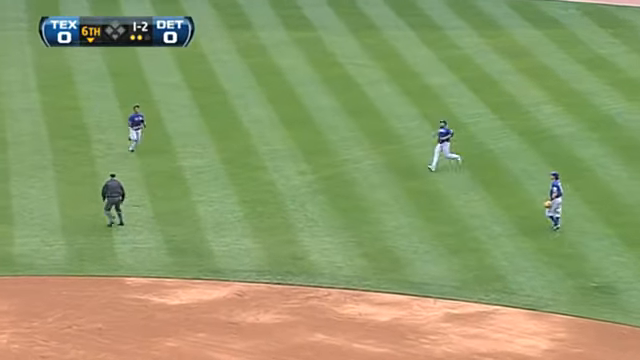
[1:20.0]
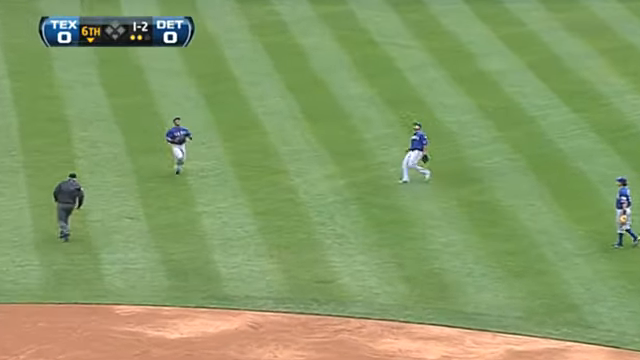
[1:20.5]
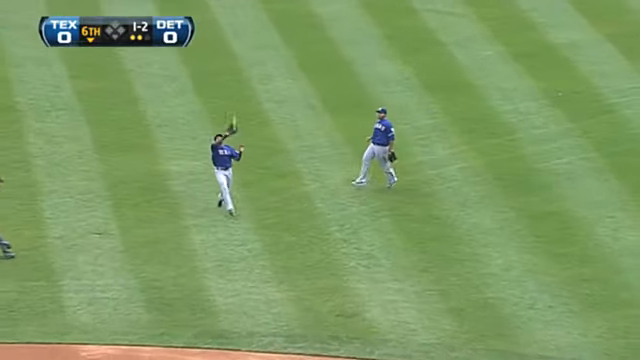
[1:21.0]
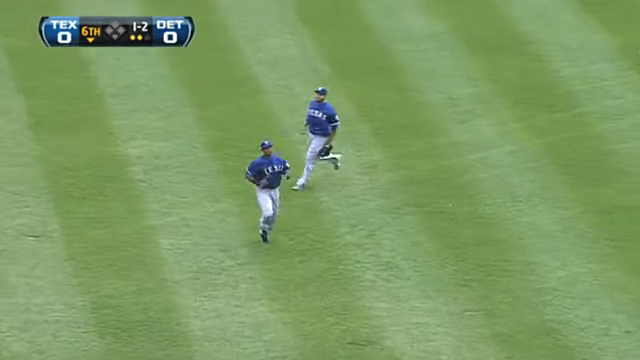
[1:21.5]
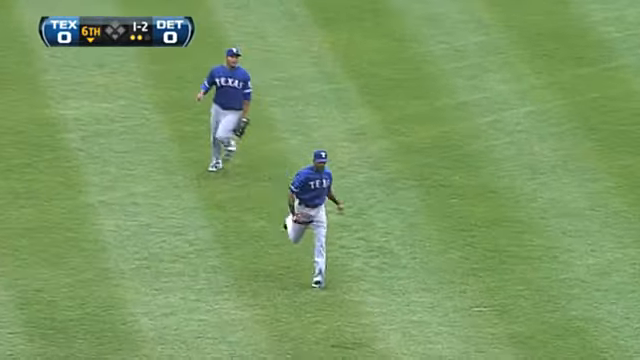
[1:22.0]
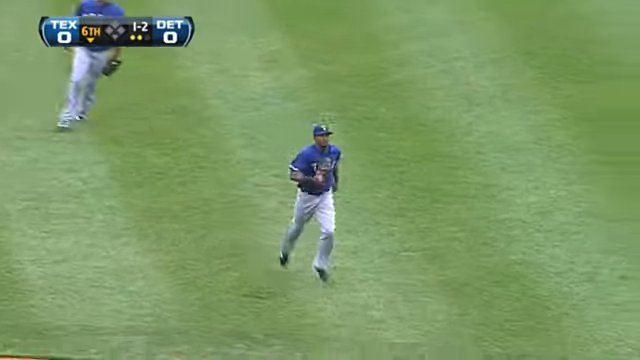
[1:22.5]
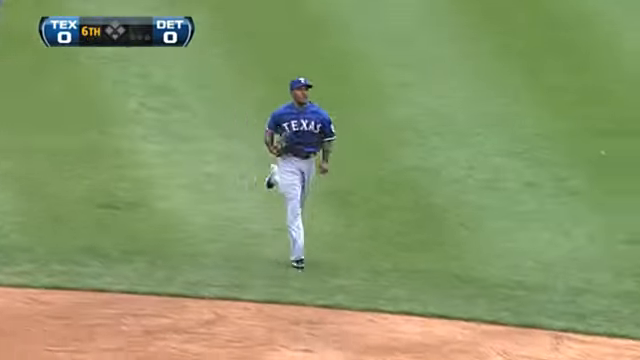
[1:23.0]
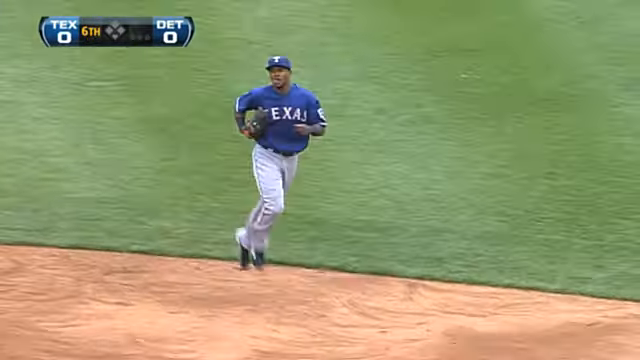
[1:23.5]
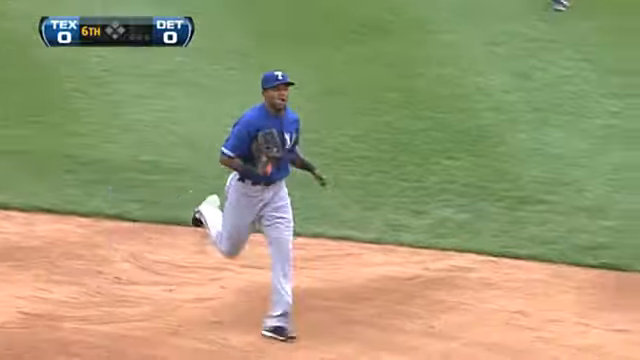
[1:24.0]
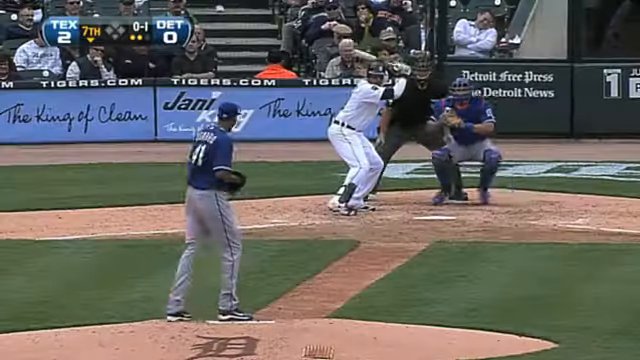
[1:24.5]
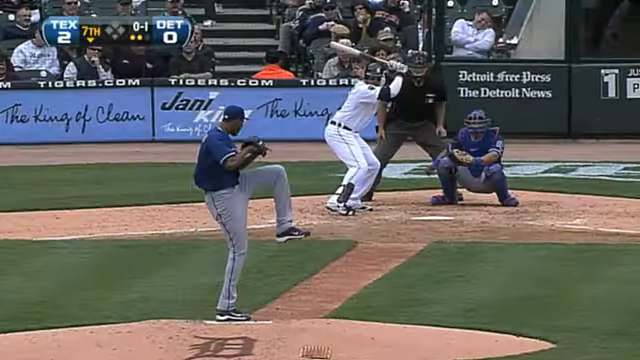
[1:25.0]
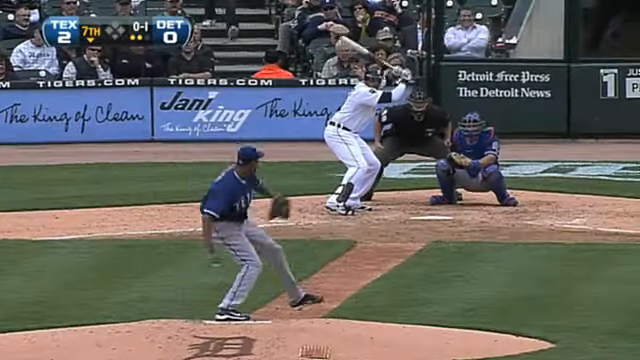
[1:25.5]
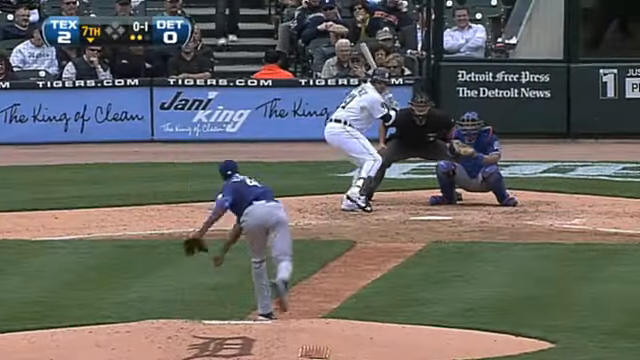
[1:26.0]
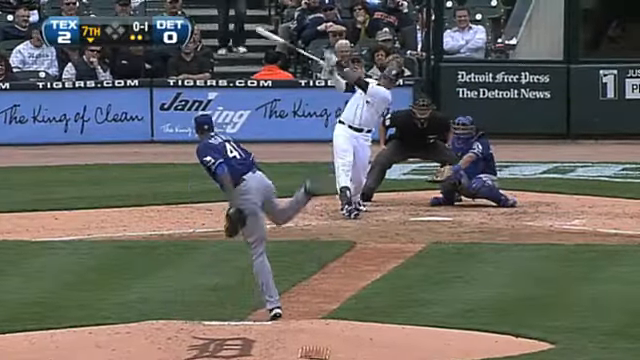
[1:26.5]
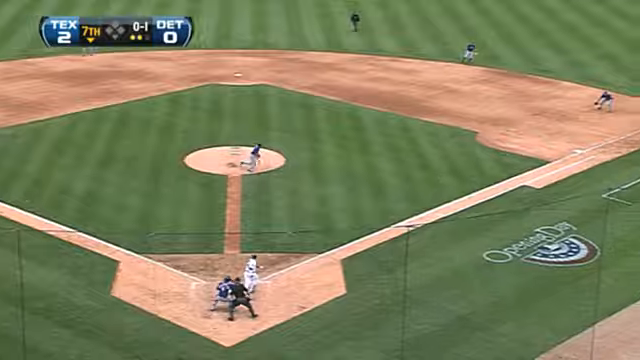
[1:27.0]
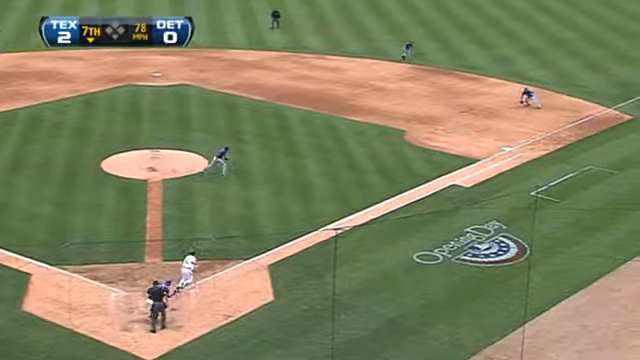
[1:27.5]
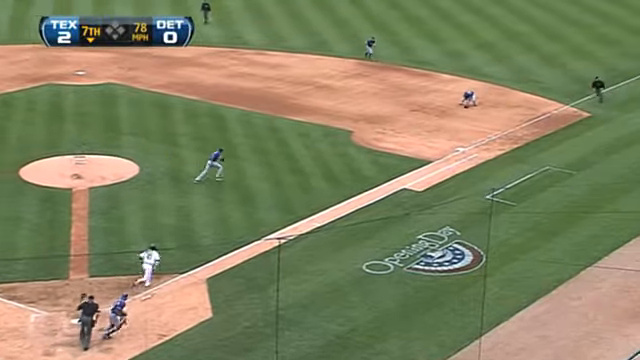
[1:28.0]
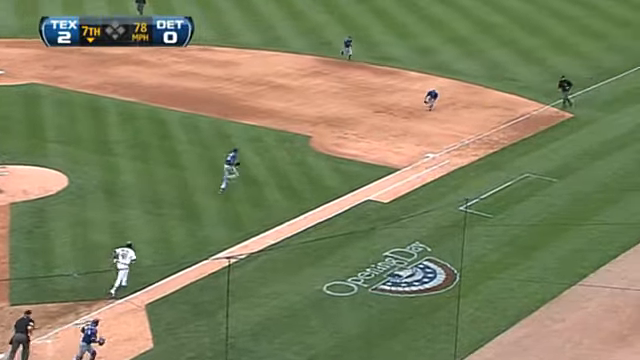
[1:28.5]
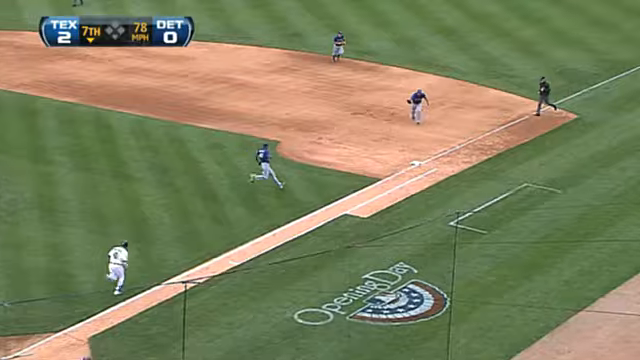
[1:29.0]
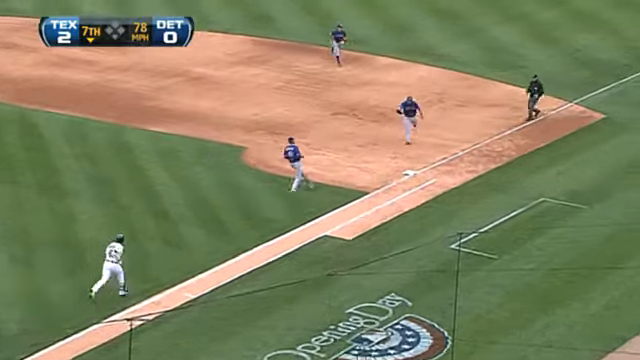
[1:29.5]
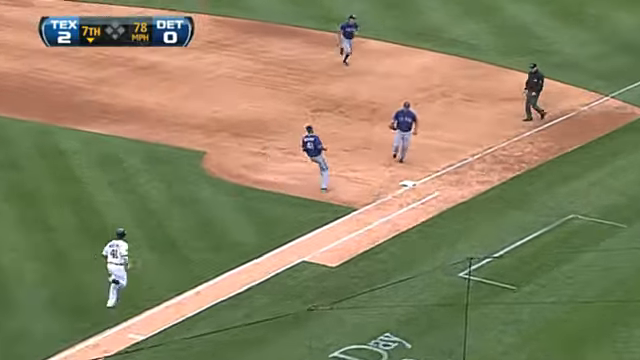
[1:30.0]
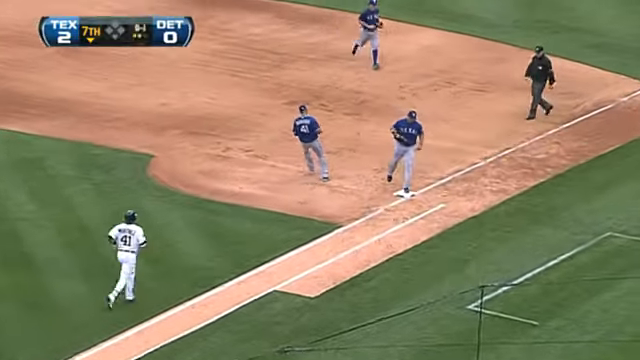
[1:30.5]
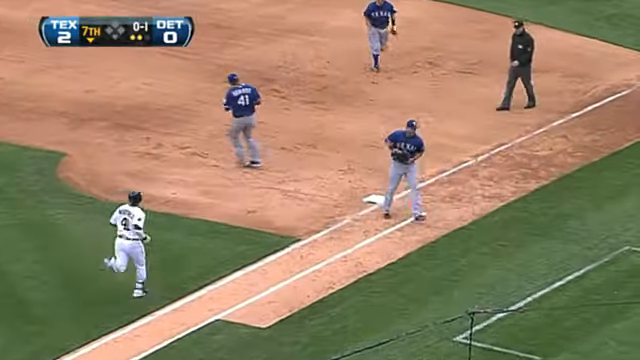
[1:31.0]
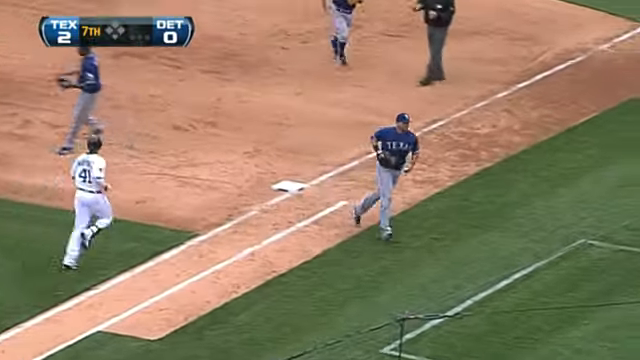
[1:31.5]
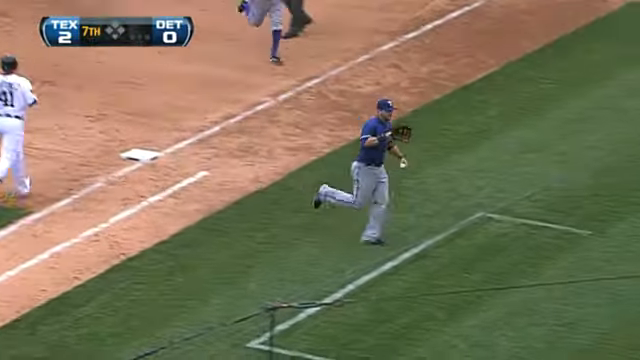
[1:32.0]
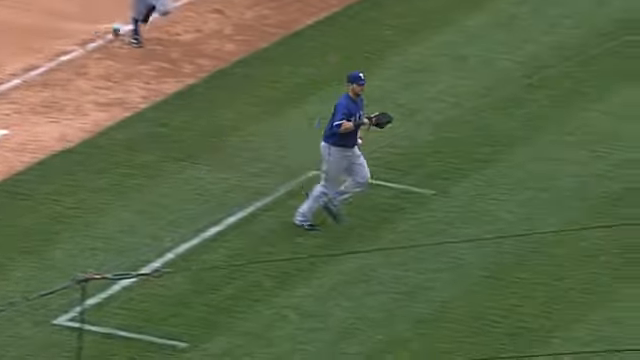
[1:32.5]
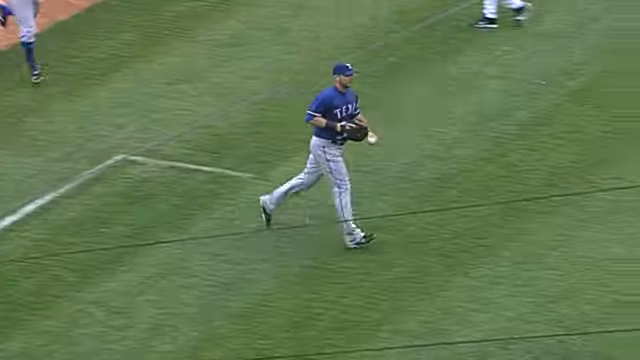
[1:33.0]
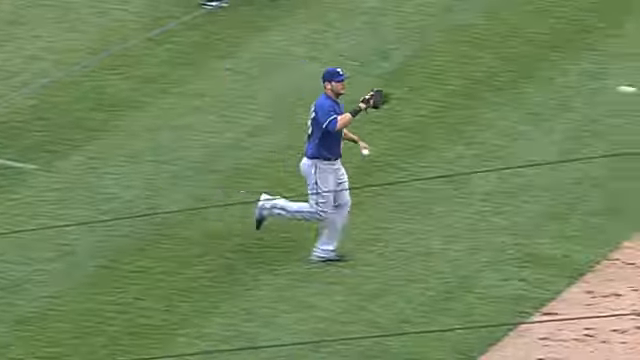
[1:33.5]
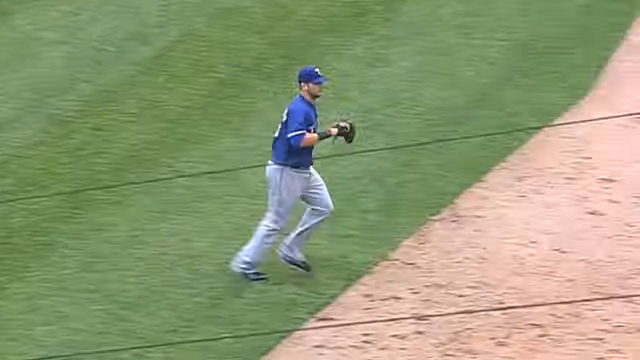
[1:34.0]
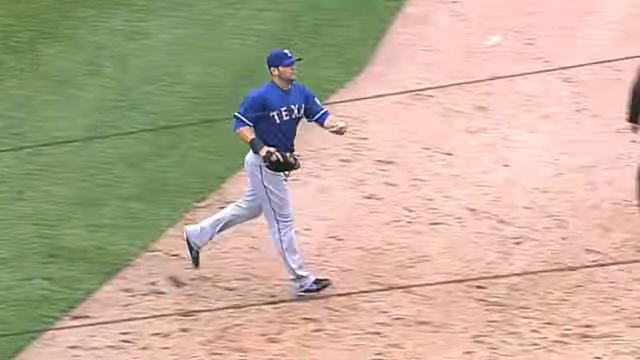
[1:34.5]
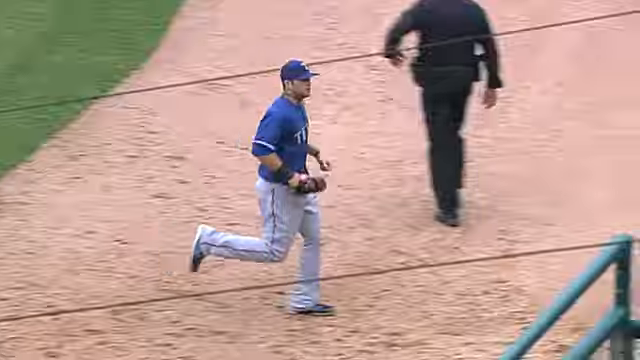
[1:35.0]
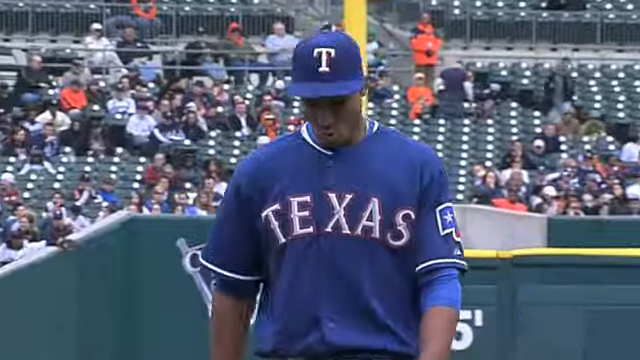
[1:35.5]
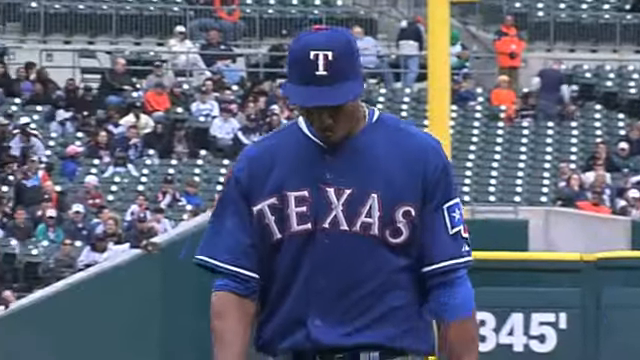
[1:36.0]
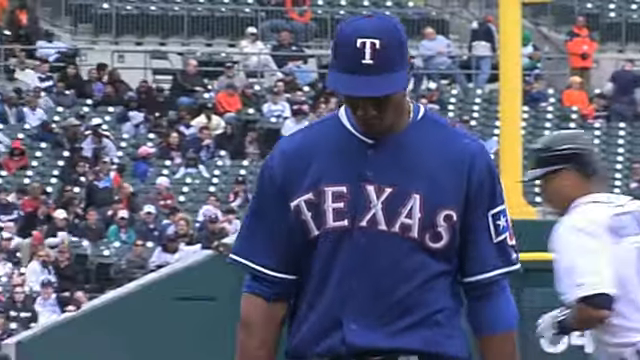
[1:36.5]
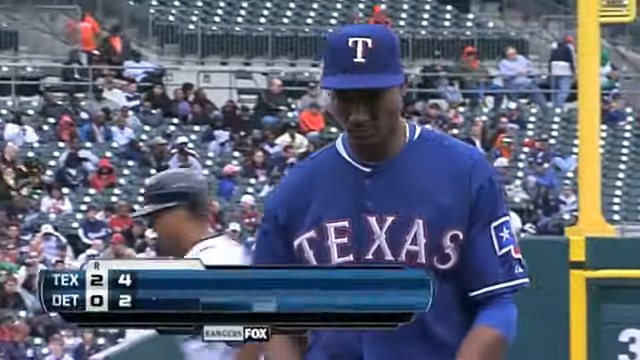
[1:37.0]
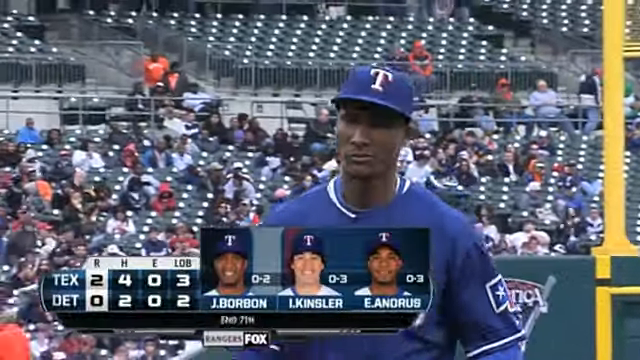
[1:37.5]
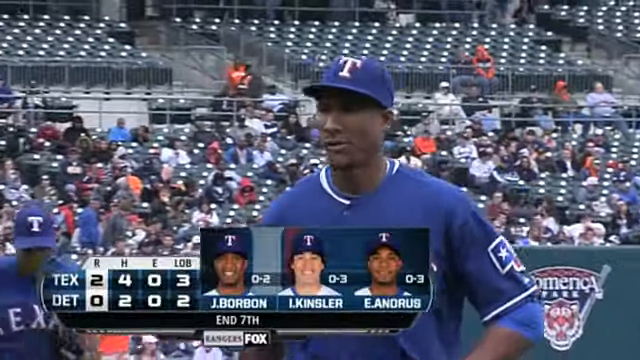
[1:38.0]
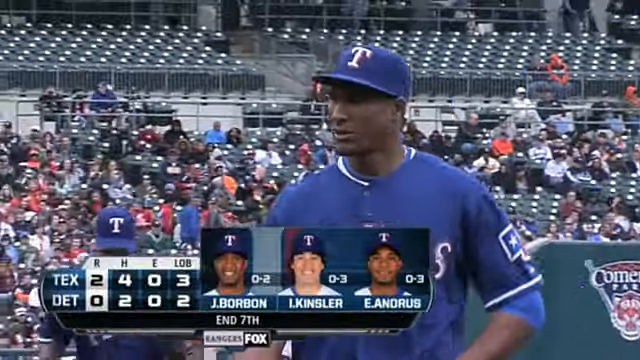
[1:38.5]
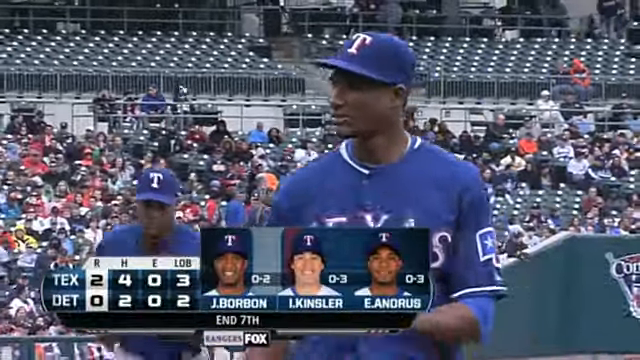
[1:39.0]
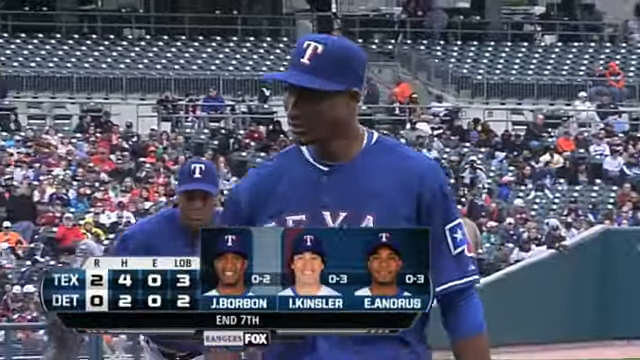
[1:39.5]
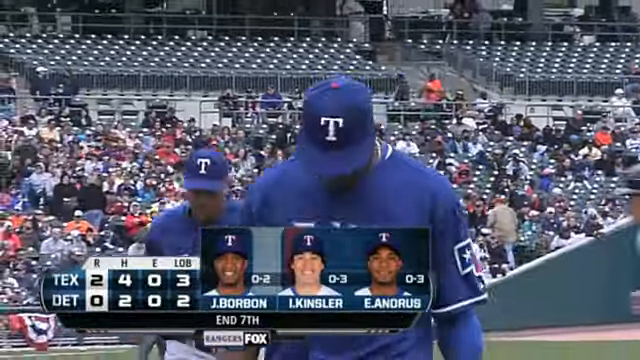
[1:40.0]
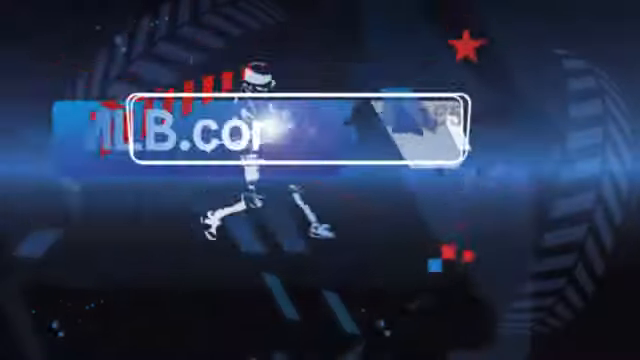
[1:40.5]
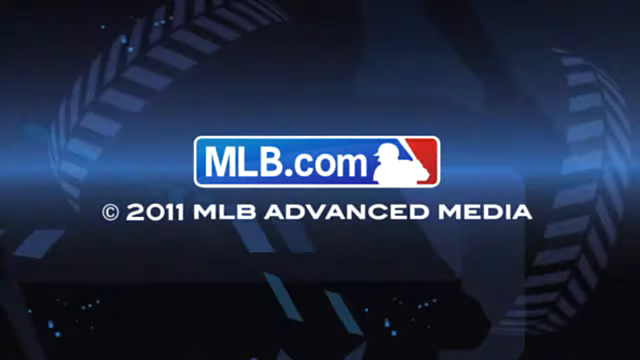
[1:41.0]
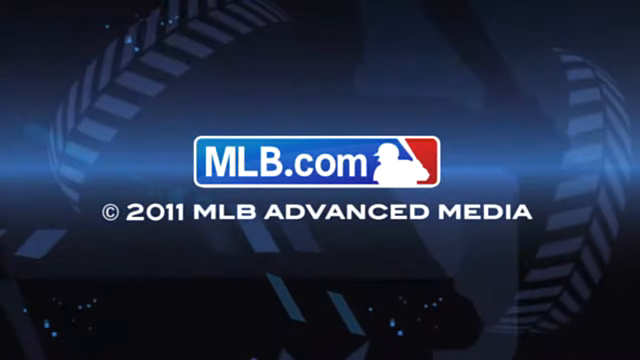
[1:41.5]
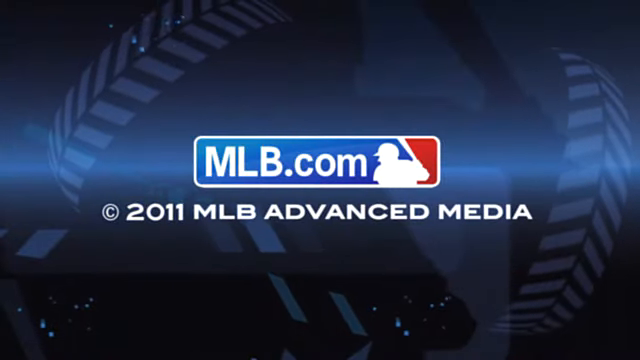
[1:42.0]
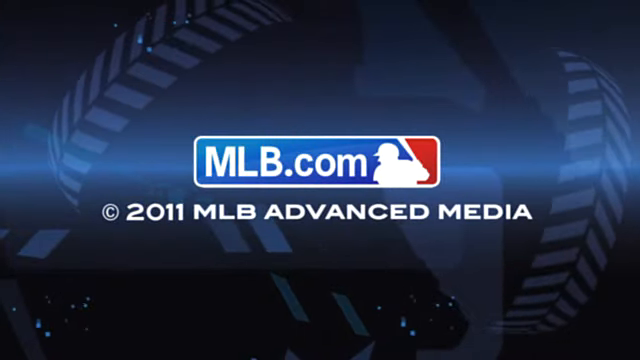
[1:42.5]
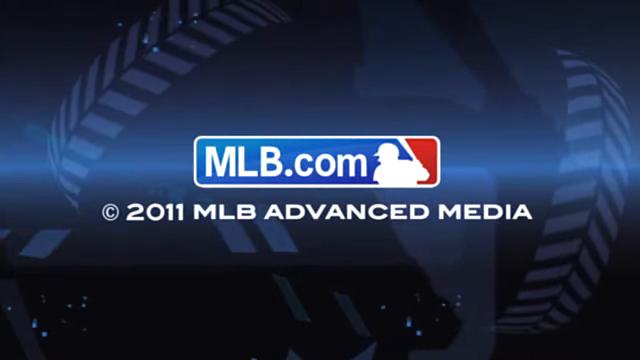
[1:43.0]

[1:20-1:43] The fly ball play continues. The second base umpire is standing in shallow center field watching two players converge on the ball. The center fielder seems to be the one who will make the catch, running a direct route to the ball, while the shortstop has dropped back and watches the ball from about 20 feet to the right of the center fielder. They converge, and the center fielder makes the catch for the Texas Rangers. Then Ogando, the pitcher, catches a ball hit back to the mound, underhands it to the first baseman to end the inning, and walks to the home team dugout. The video ends with the red, white and blue MLB logo.